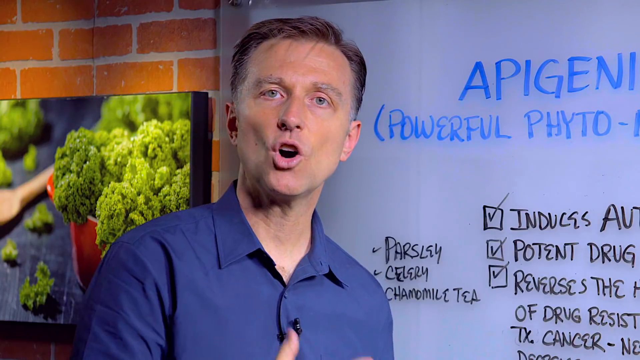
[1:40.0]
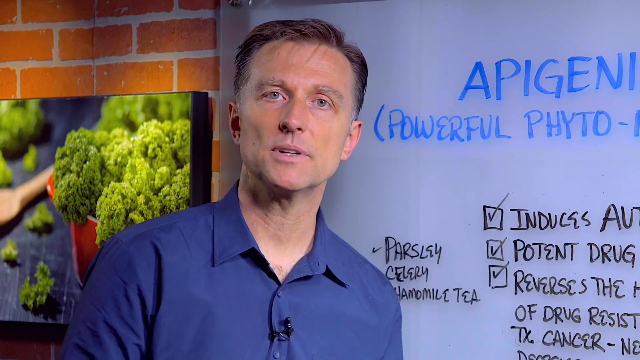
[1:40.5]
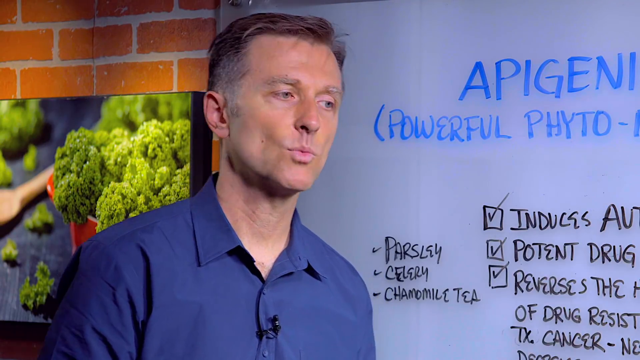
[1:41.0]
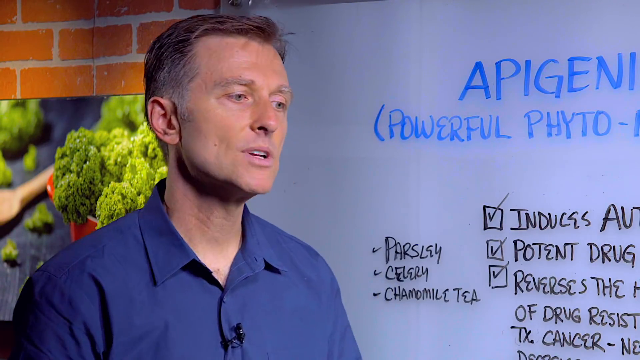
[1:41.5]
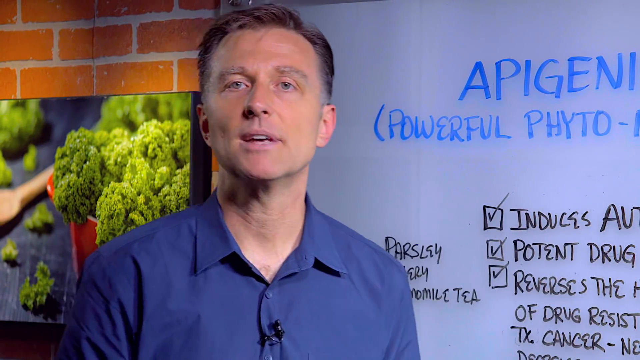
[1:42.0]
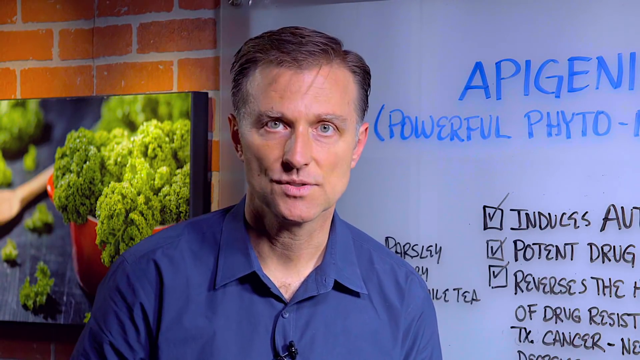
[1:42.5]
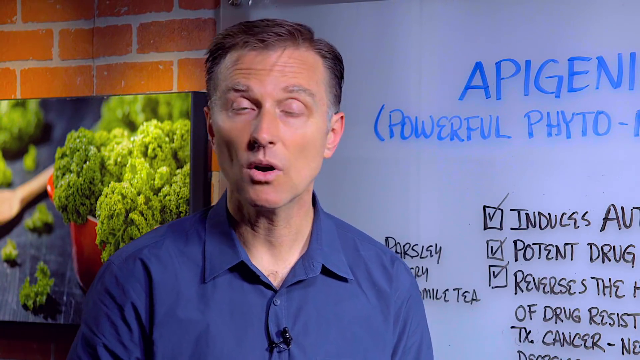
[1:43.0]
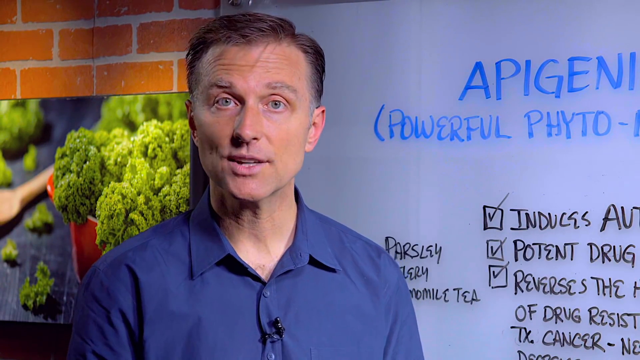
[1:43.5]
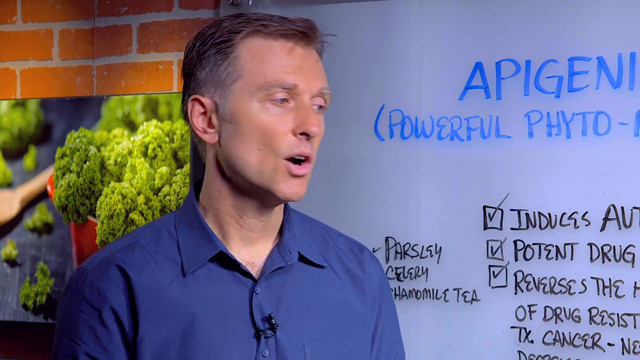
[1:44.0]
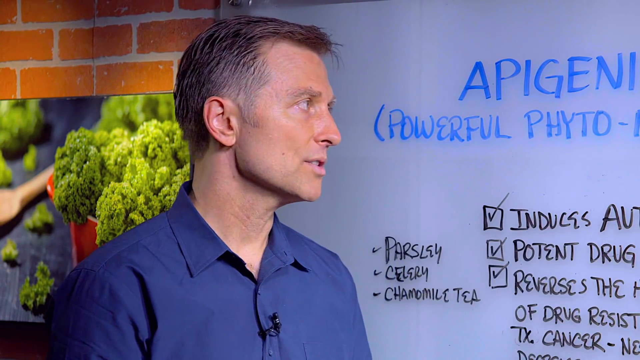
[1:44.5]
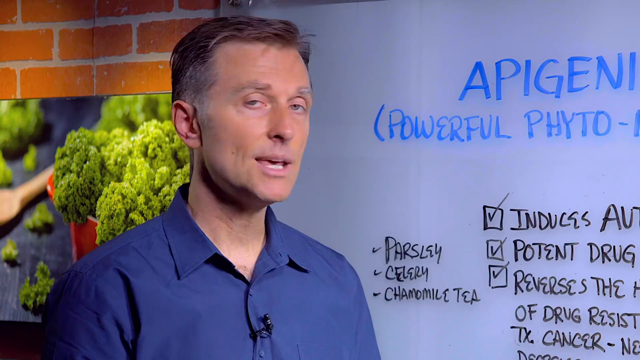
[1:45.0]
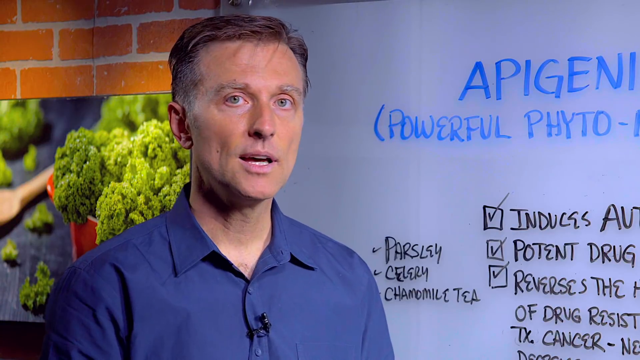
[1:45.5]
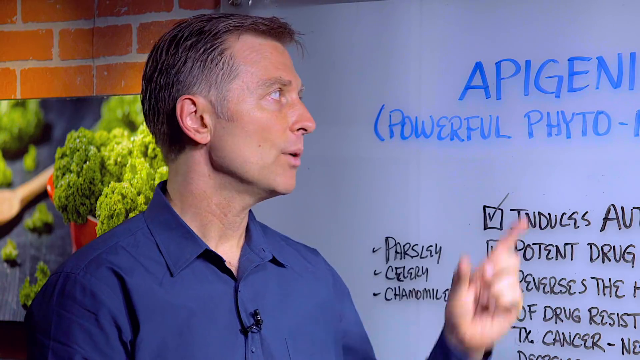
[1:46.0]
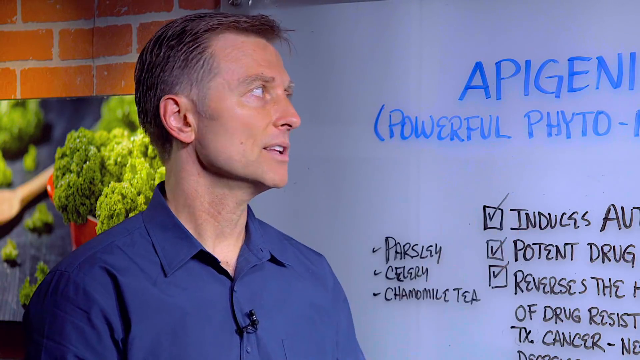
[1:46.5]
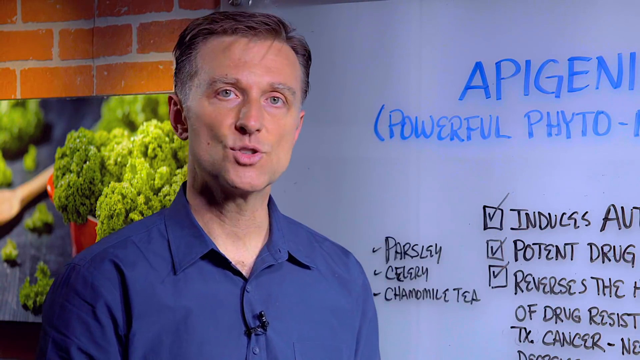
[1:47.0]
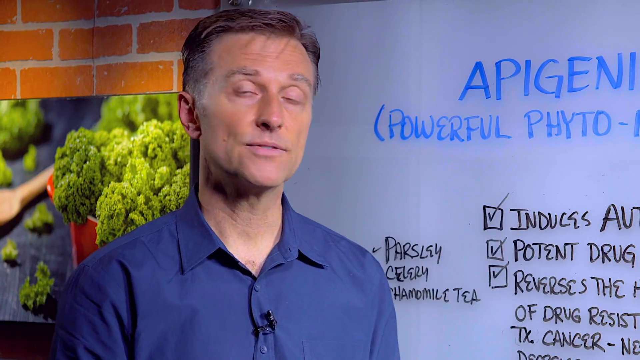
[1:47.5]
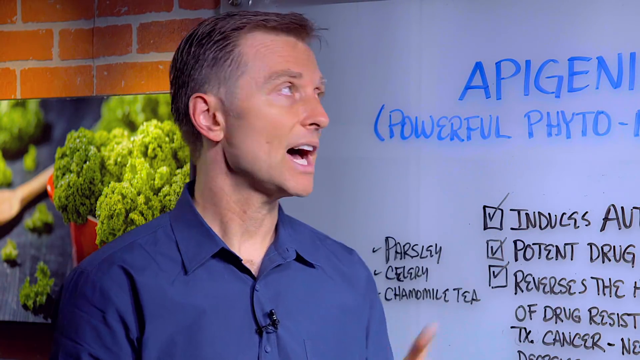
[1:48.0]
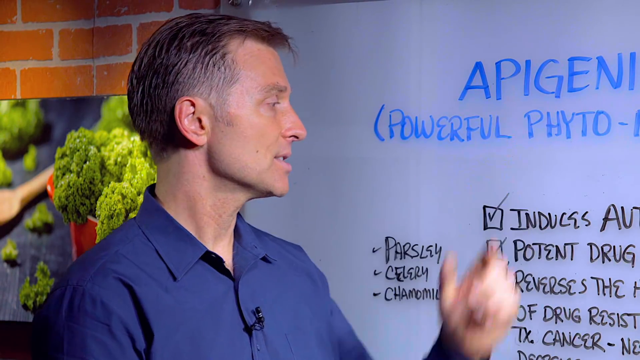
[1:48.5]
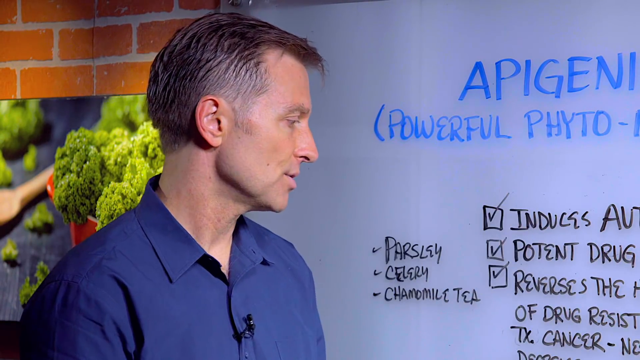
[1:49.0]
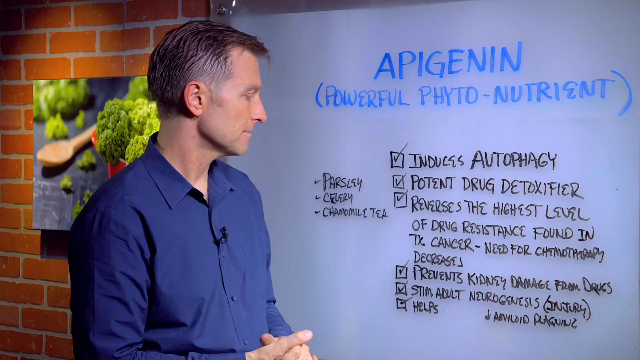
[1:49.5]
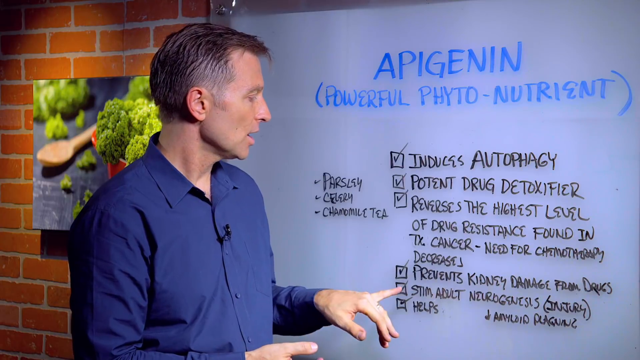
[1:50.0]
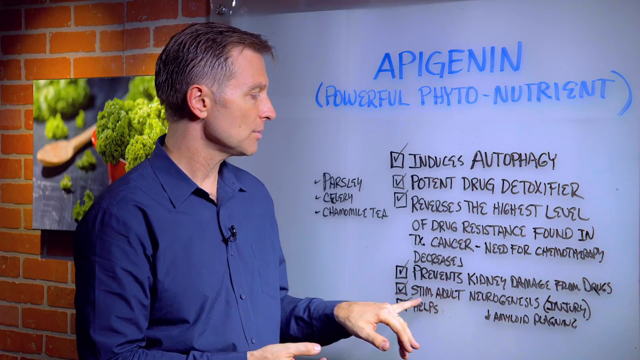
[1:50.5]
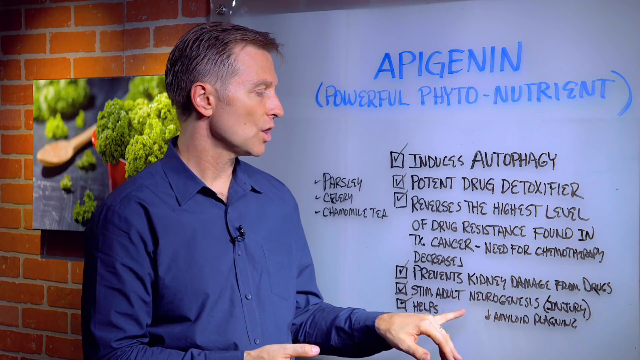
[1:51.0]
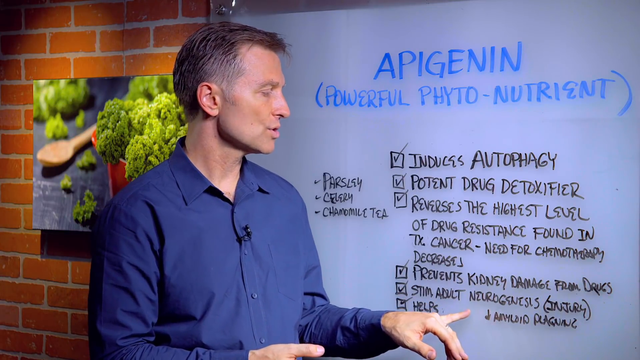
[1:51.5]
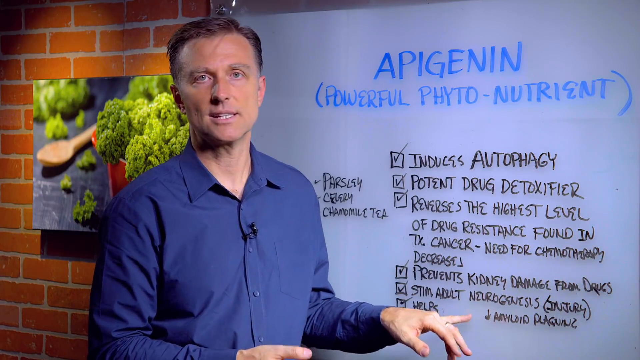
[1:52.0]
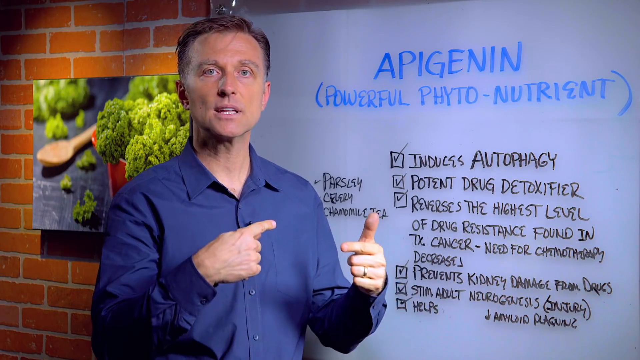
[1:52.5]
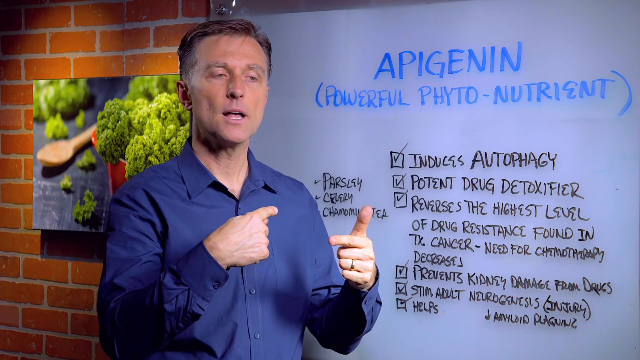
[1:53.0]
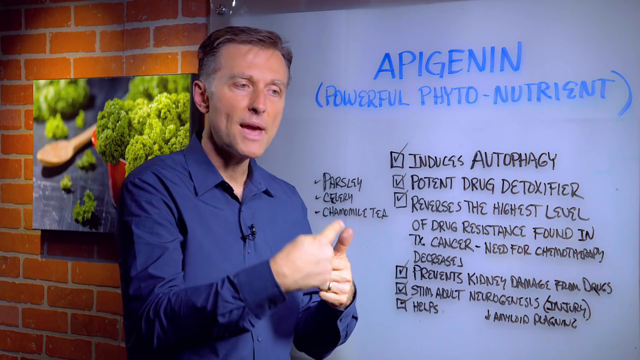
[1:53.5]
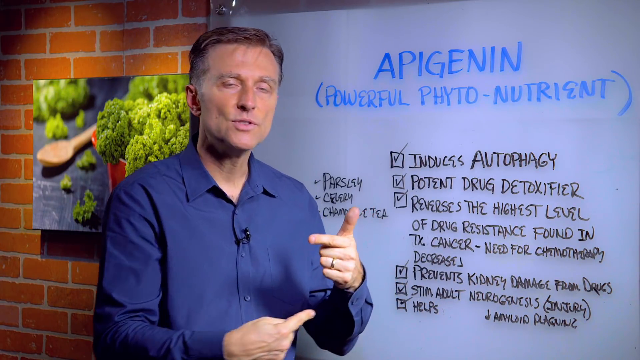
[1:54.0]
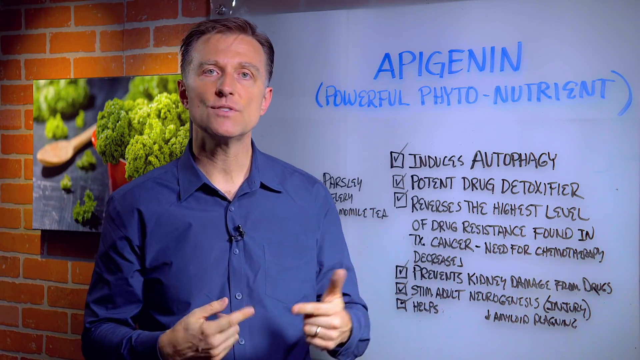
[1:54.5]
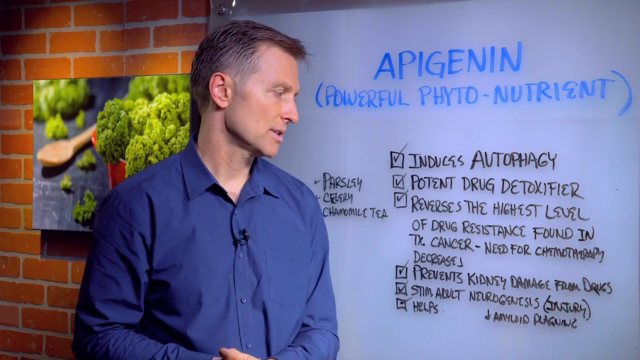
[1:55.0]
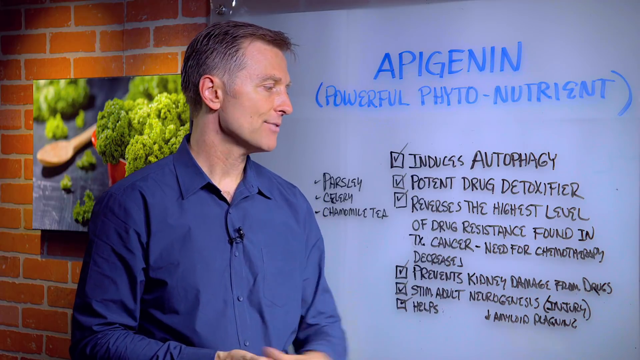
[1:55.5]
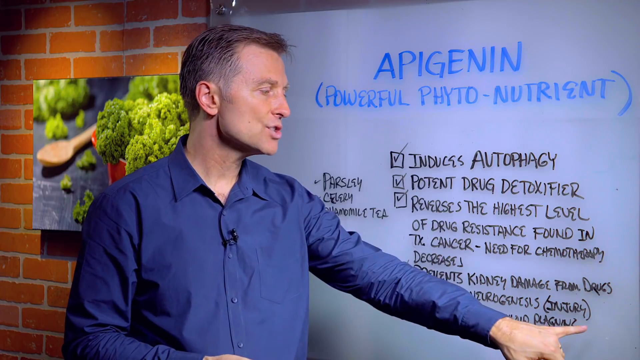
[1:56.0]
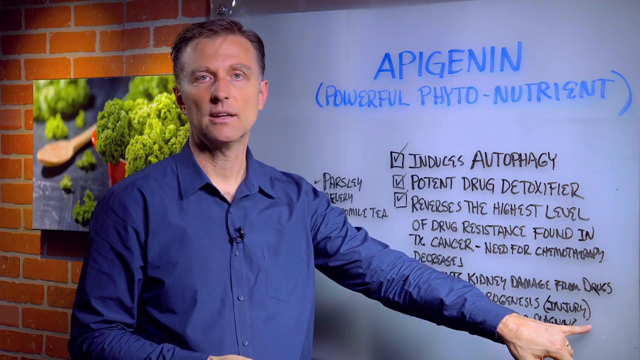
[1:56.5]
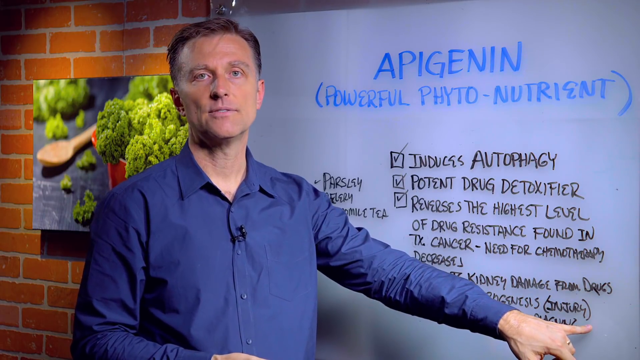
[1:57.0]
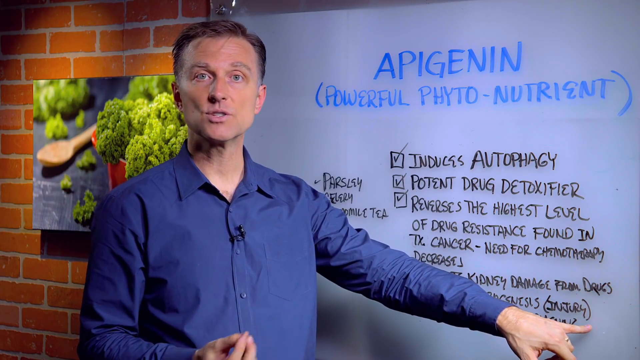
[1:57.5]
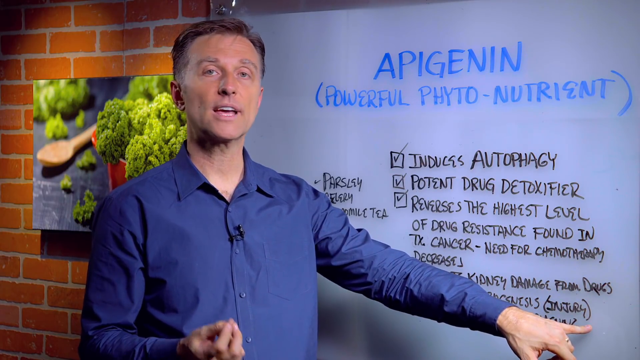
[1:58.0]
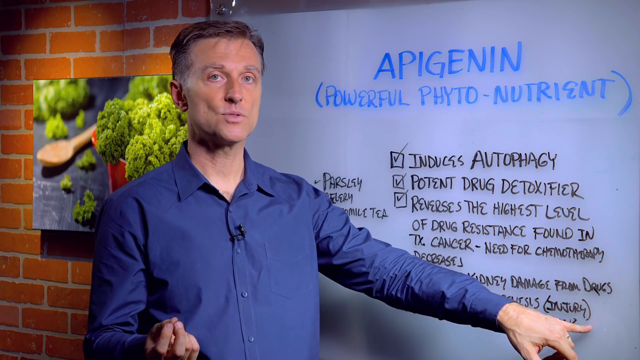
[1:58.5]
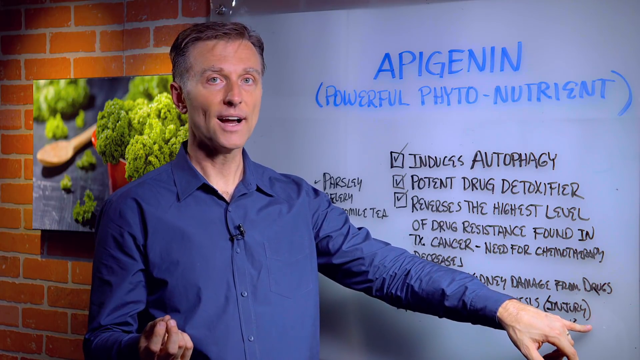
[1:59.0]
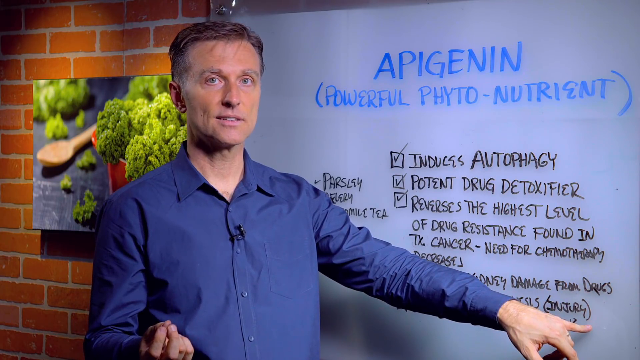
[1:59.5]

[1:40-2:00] The shot is now a close-up of the man, and at first the picture of the broccoli is somewhat cut off. He keeps talking energetically to the viewer, using both hands to point out things on the whiteboard. He points to one of the last points, which includes "adult neurogenesis" followed by "(injury)", pointing to the end of it with his left pinky. Apart from the closer framing at the start, the shot changes little as he continues talking.